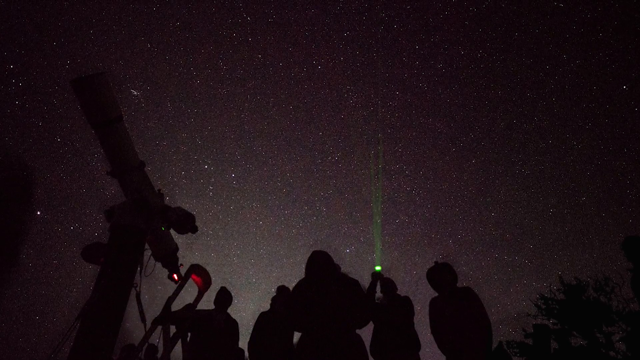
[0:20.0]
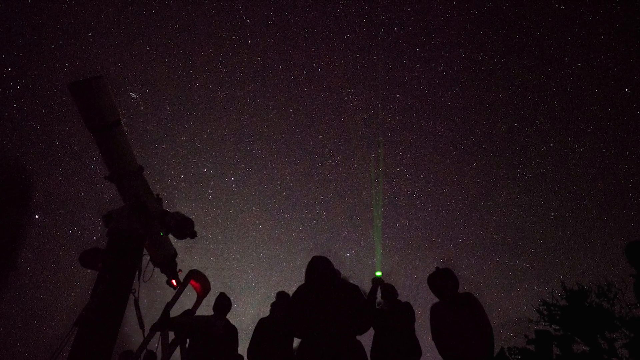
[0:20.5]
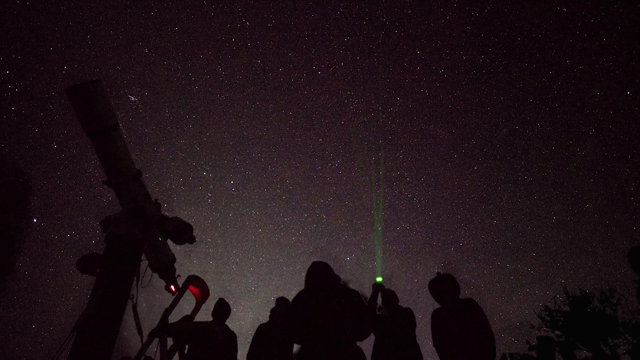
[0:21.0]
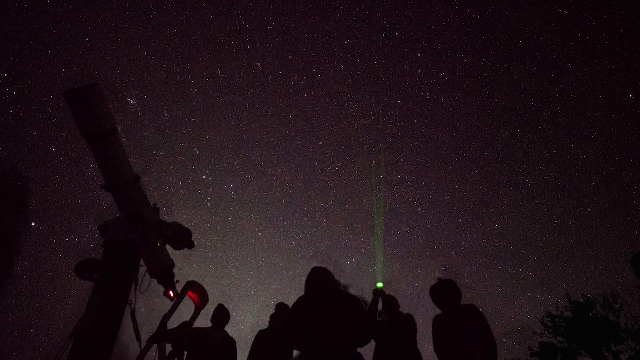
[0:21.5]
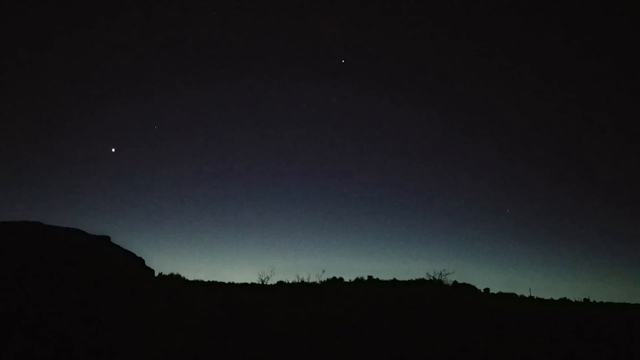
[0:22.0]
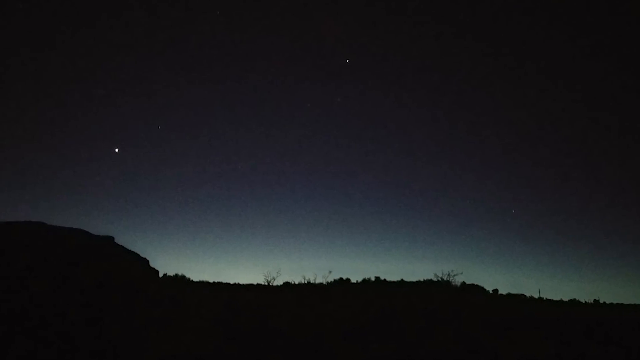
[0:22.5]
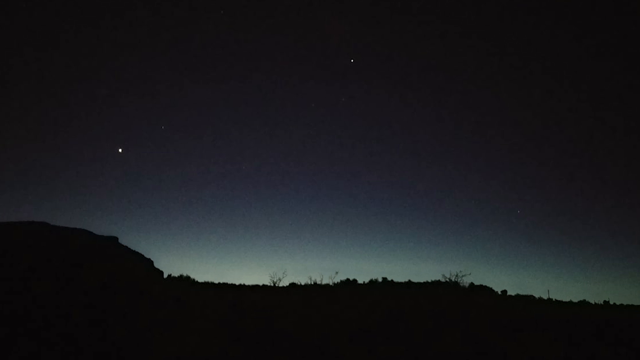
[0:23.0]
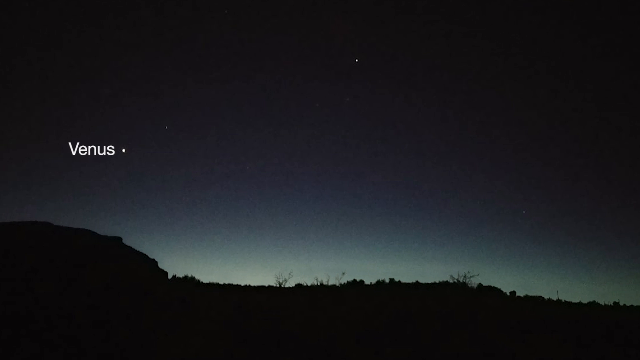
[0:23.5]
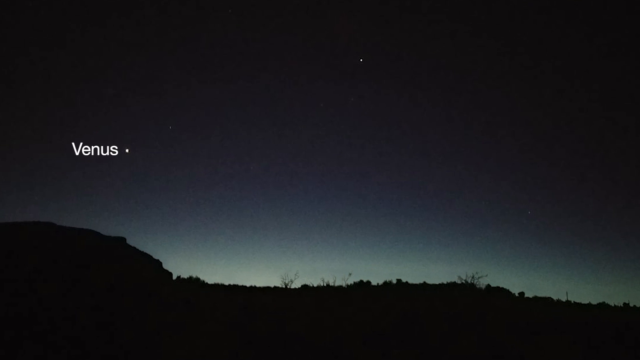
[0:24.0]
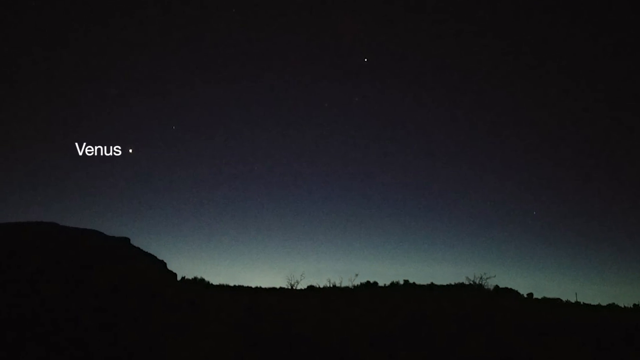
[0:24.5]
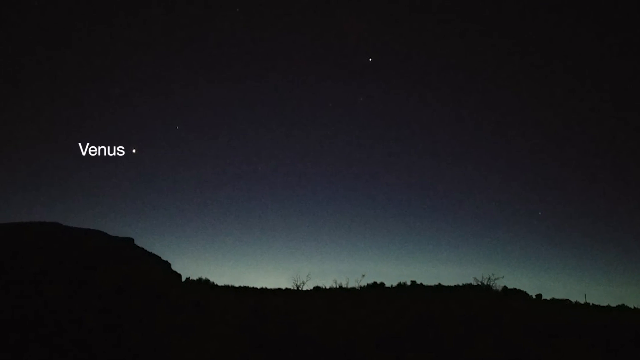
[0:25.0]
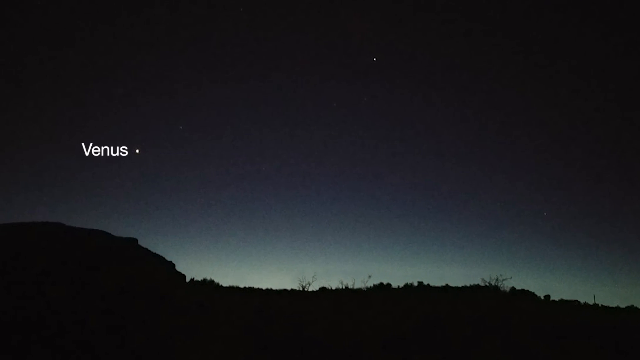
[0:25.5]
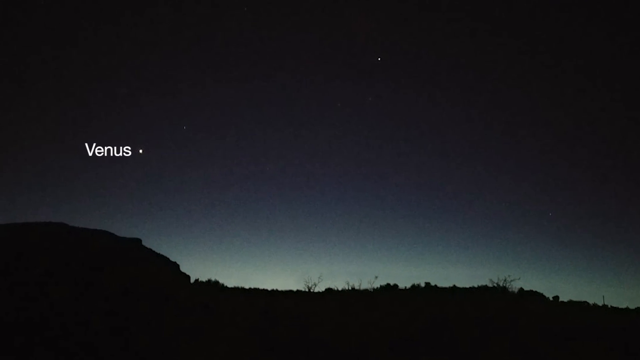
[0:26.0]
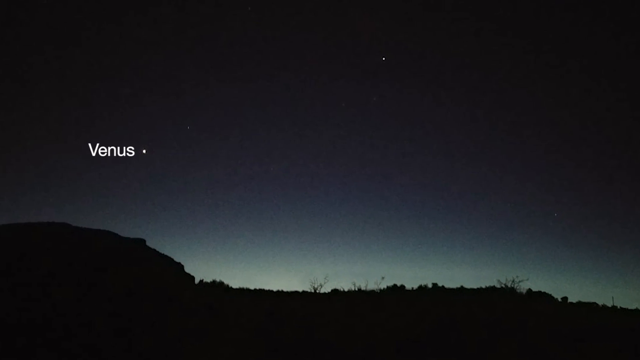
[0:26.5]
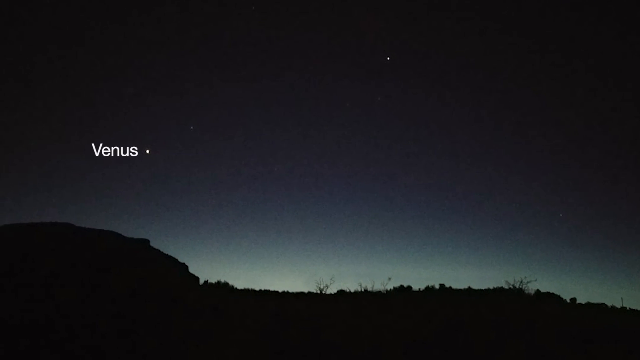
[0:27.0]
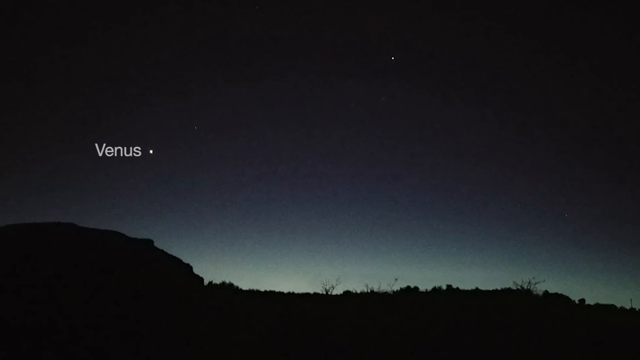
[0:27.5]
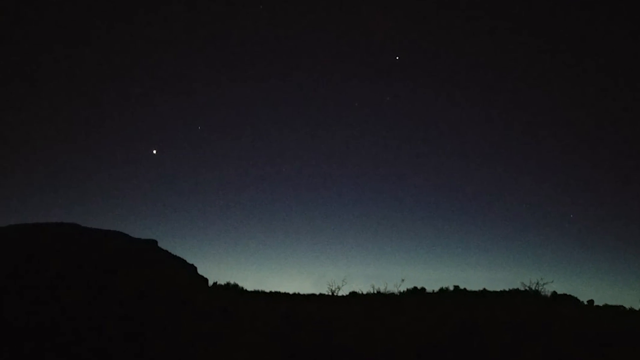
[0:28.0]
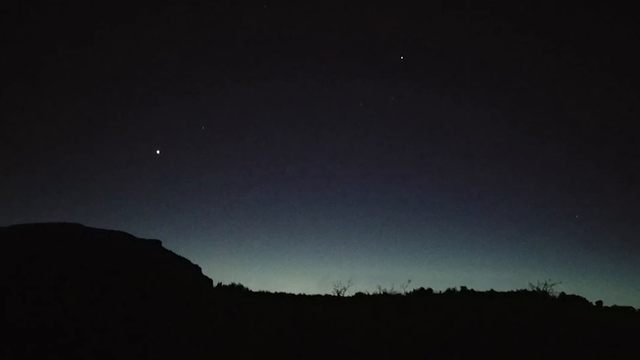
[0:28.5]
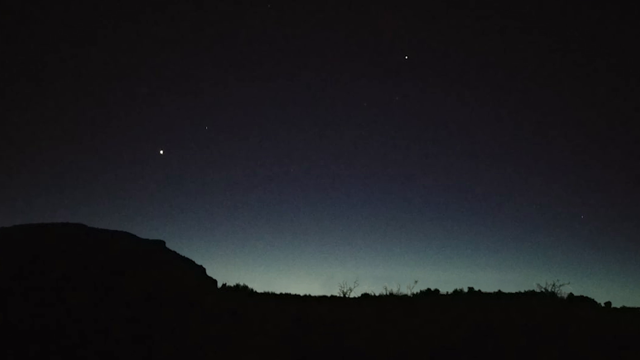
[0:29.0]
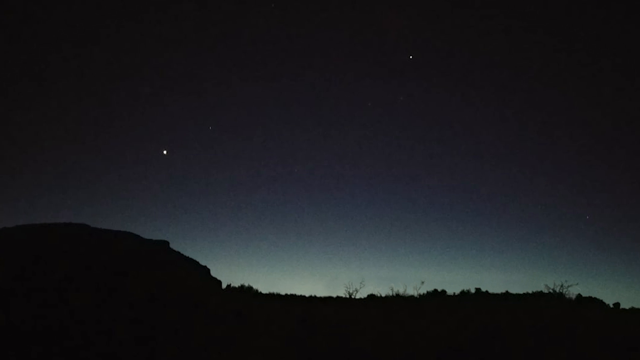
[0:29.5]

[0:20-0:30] The video pans upward, showing more of the night sky. Next comes a landscape that looks like a desert, though it is too dark to tell for sure. There is a glow on the horizon, so it was probably taken around dawn or twilight; it is not completely dark. The planet Venus is visible, very bright and looking like a star, along with other stars and planets in the sky that are not labeled.